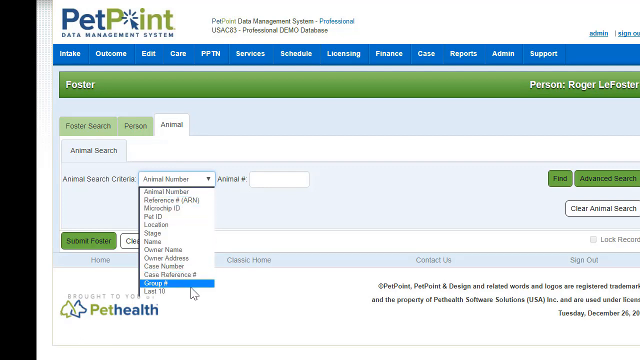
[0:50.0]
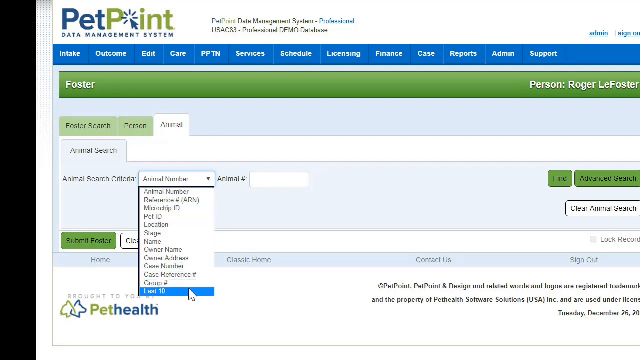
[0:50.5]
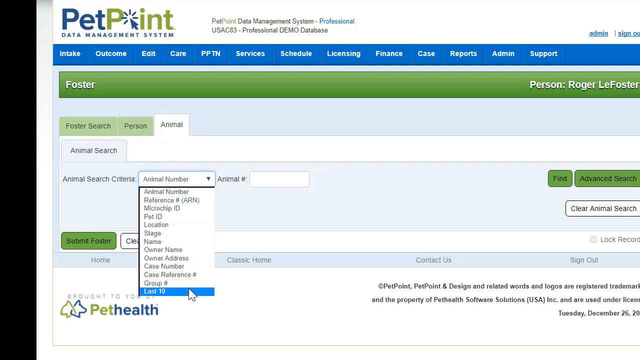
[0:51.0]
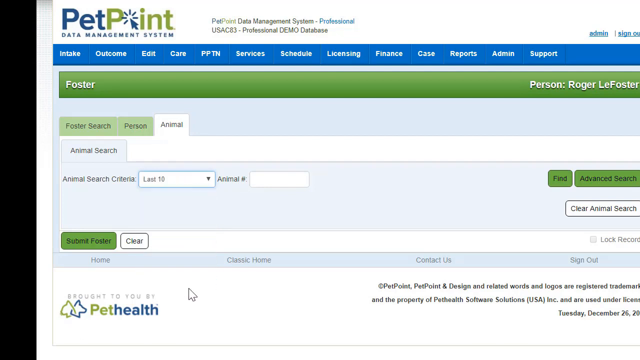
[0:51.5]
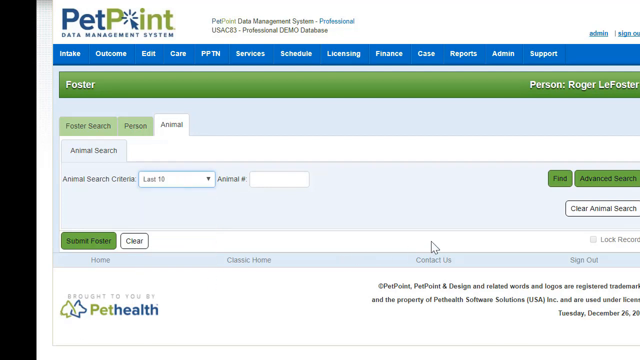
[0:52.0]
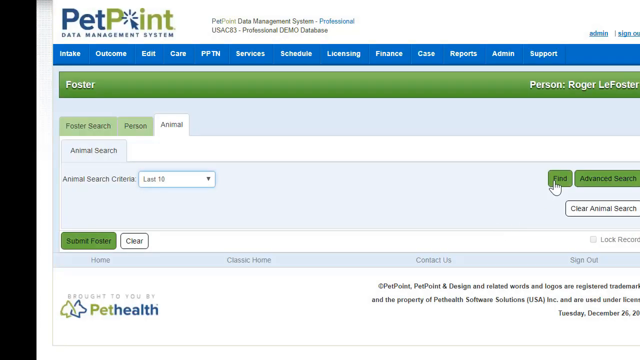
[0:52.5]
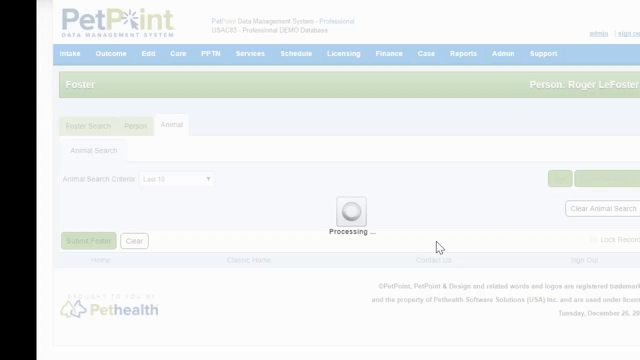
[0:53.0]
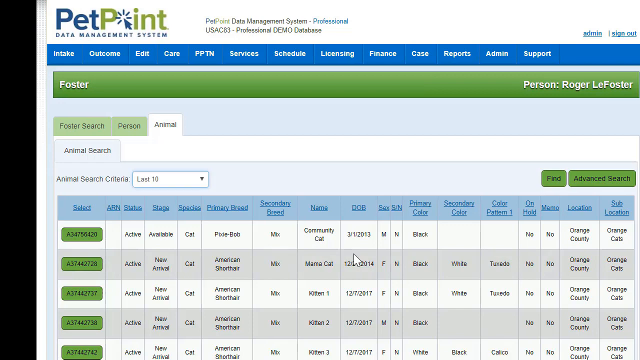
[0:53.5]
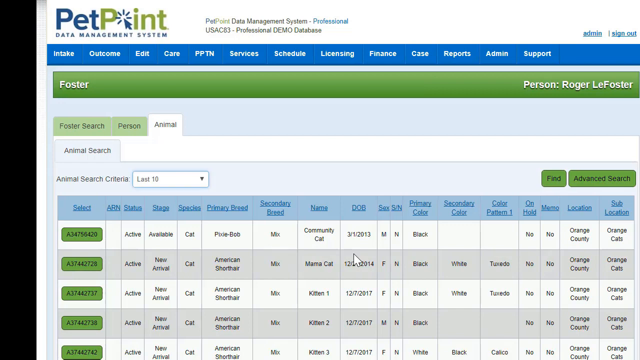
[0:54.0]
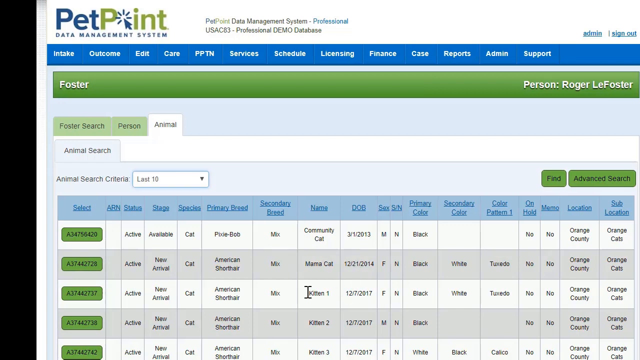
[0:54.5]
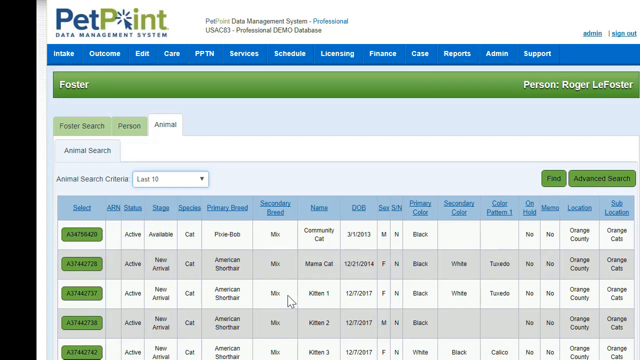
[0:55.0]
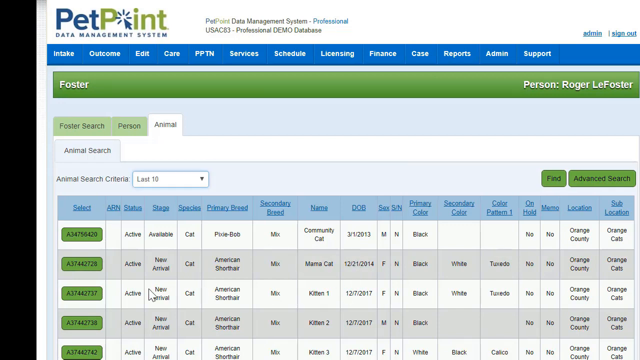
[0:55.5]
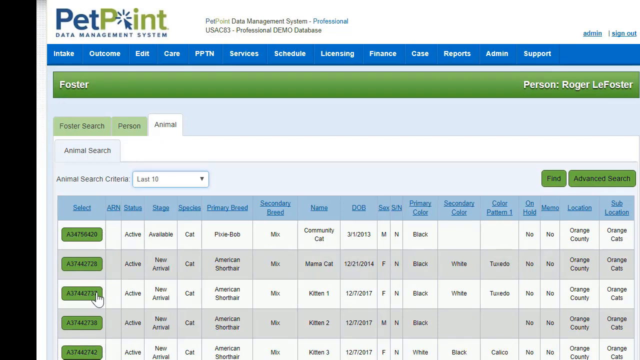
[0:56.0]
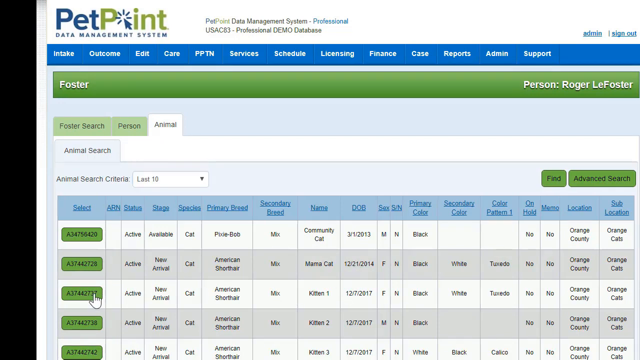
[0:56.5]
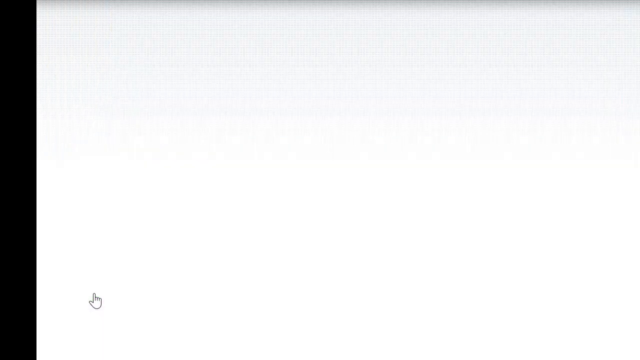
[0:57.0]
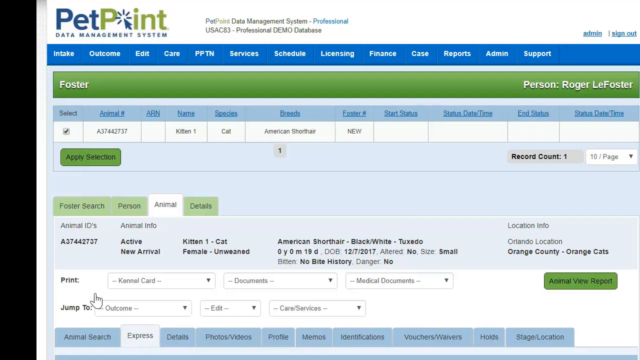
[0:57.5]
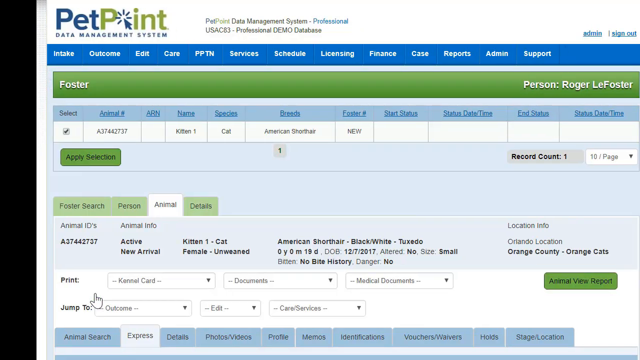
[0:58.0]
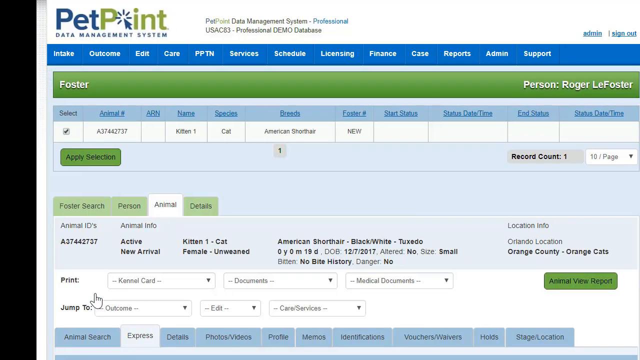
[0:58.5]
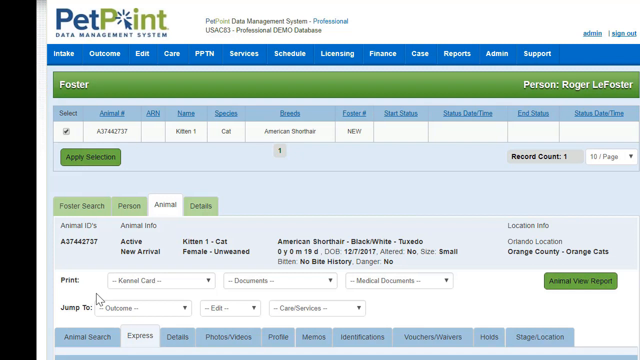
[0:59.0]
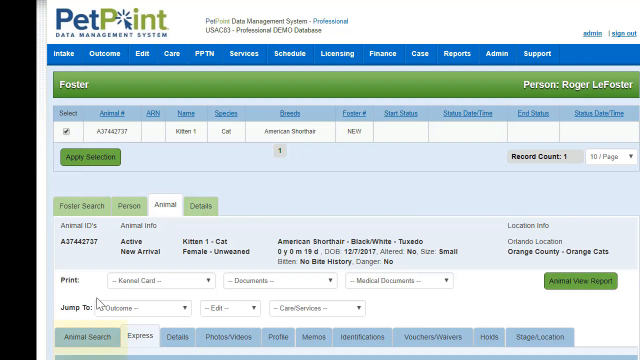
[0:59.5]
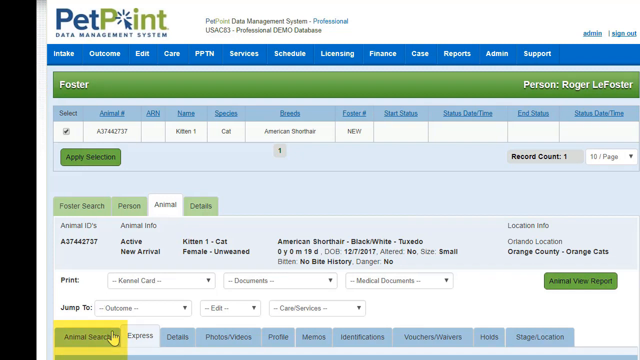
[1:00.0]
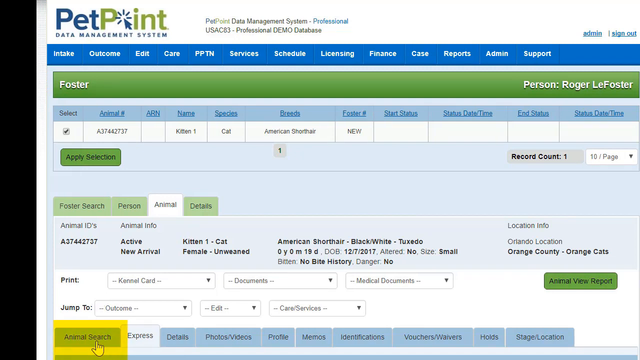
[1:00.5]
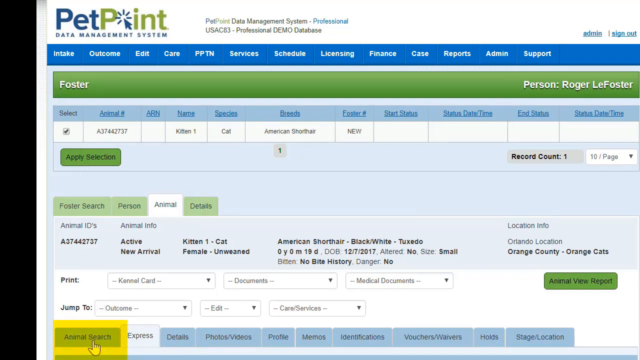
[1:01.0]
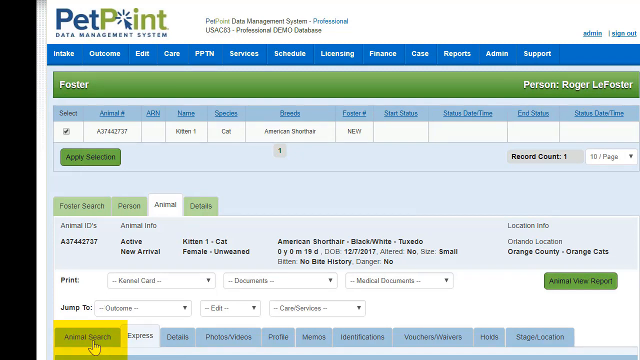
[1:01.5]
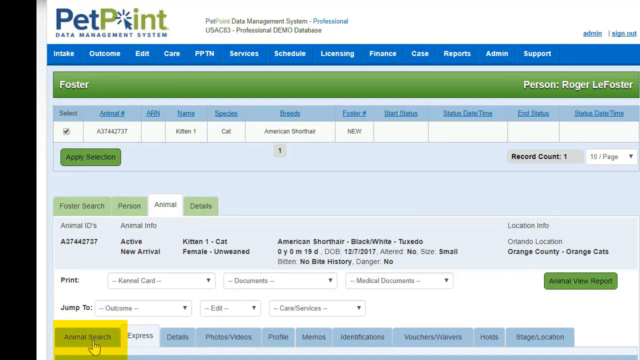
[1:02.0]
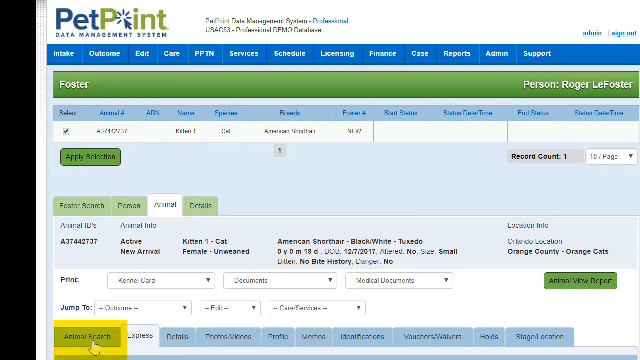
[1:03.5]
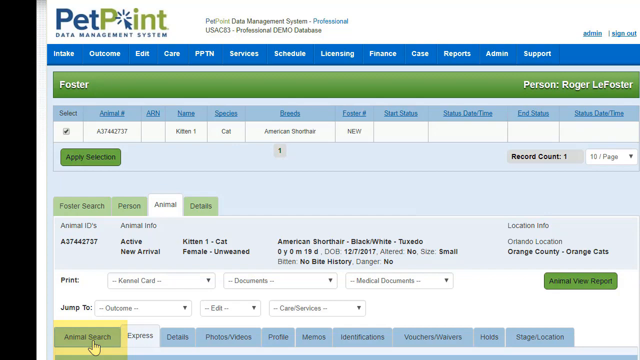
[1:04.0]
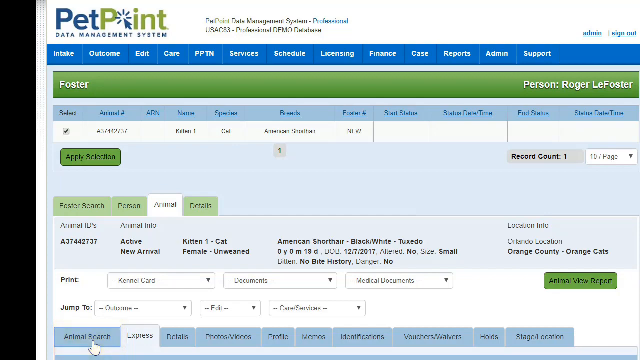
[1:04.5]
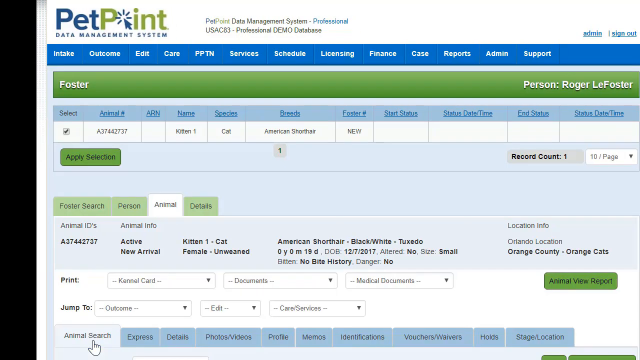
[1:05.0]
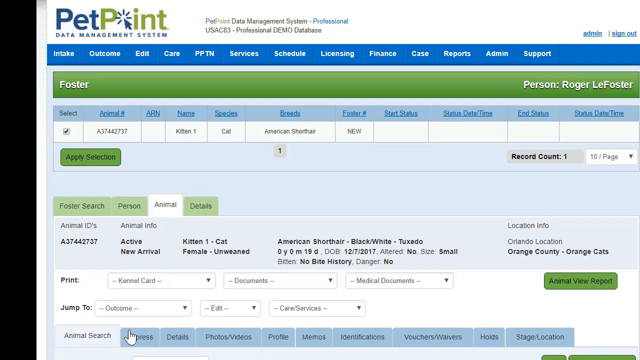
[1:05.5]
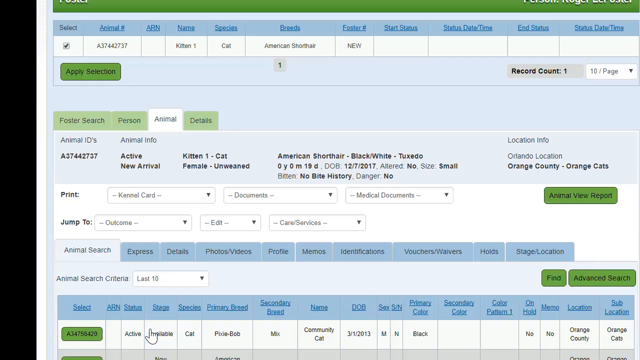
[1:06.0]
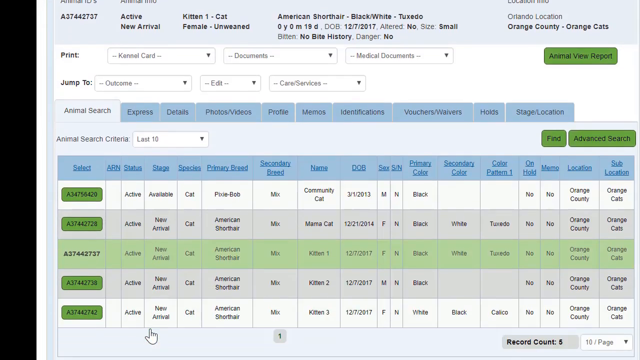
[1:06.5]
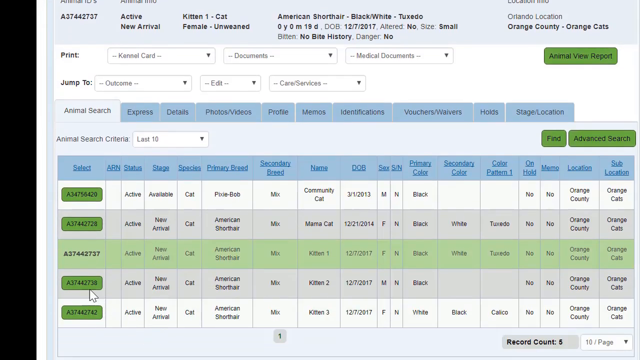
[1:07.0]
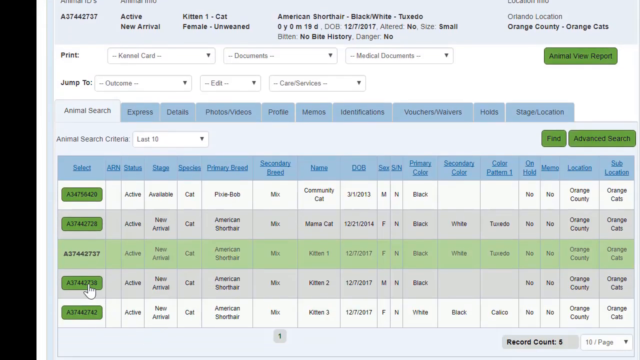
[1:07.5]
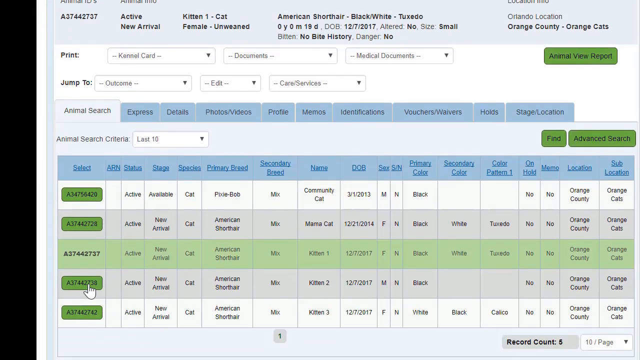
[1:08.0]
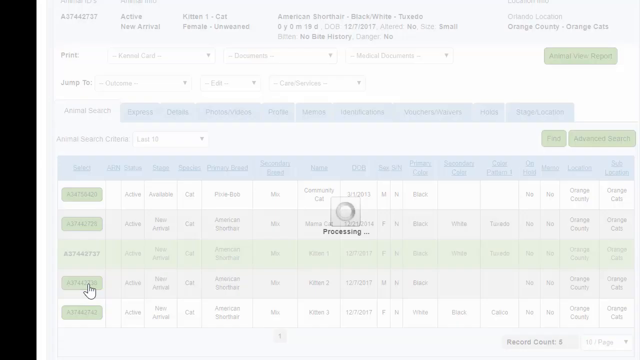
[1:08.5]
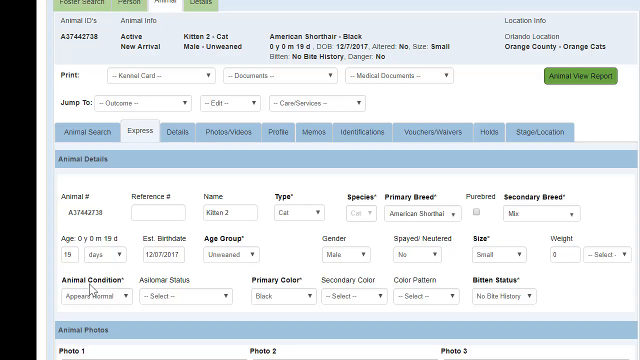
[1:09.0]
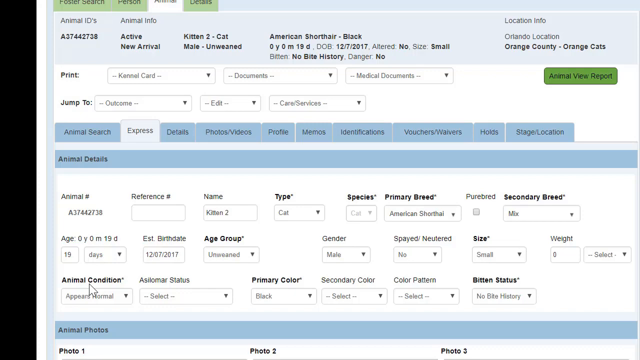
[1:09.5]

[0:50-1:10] On the PetPoint website's foster page, the Animals tab is open with a drop-down menu open next to "Animal Search Criteria." The user scrolls down to the option "last 10" and clicks a green button reading "find." The screen grays out somewhat and a small loading icon, a spinning circle, appears. Several results load for different animals, which all seem to be cats, along with a chart listing their different specifications. The user clicks the third option, with the ID A37442737, which opens the profile page for that animal. The user then clicks the animal search tab at the bottom of the screen, which seems to reload the results, and clicks the fourth option, with the animal ID A37442738, and that page loads.